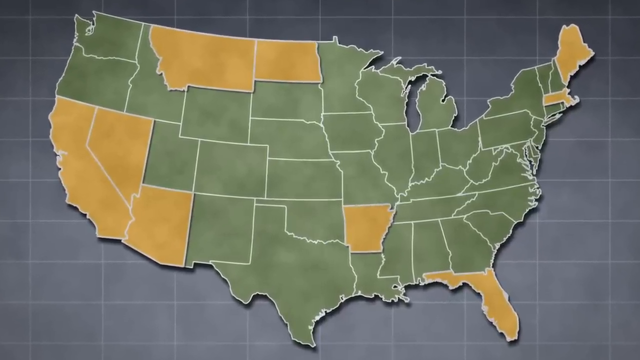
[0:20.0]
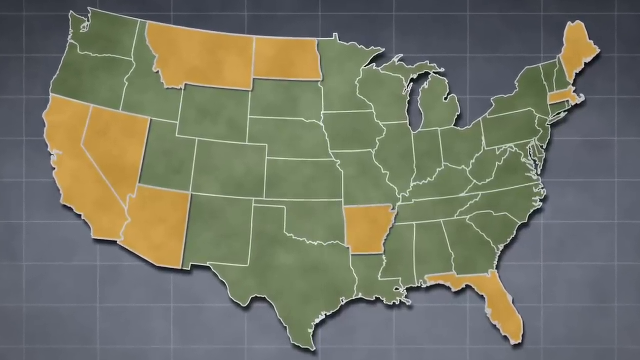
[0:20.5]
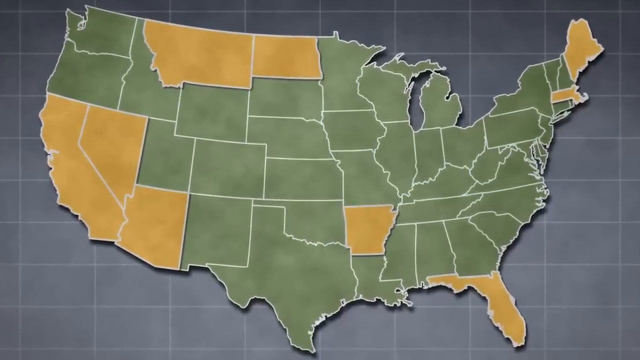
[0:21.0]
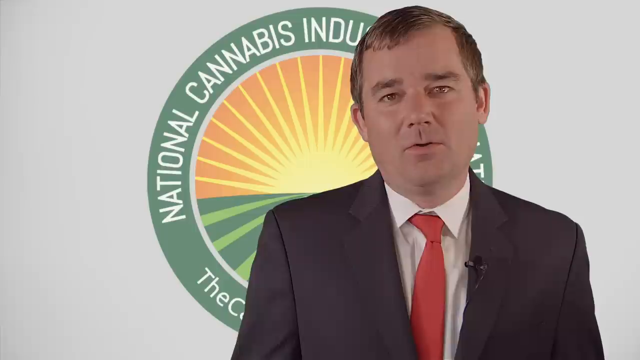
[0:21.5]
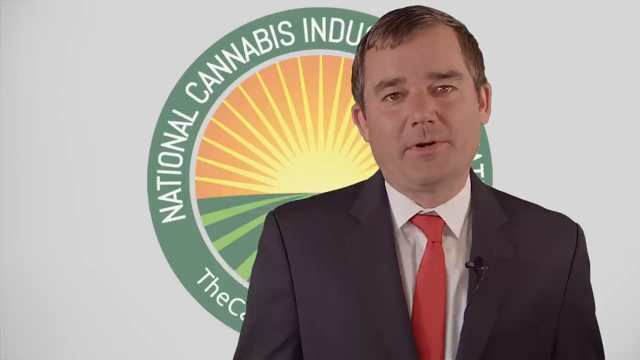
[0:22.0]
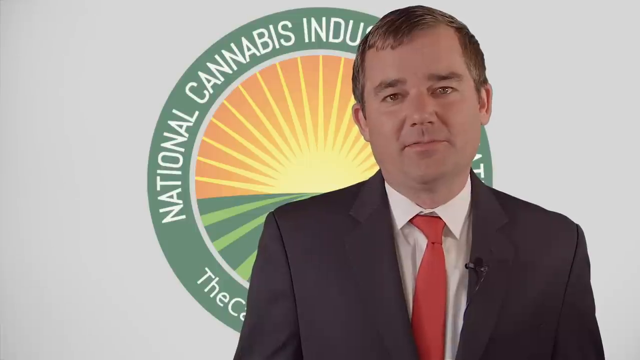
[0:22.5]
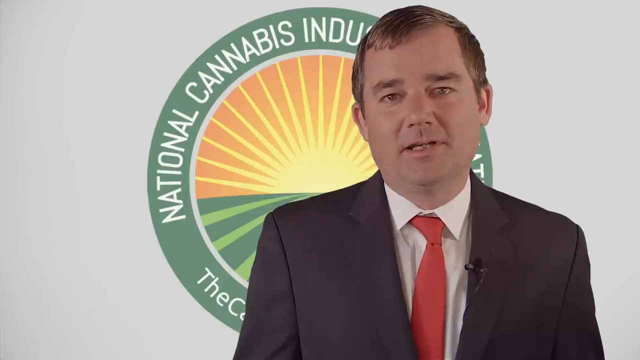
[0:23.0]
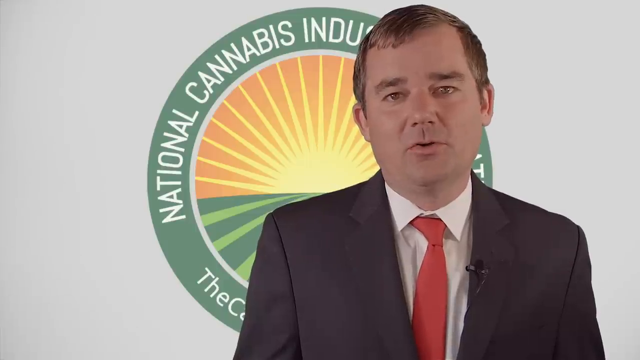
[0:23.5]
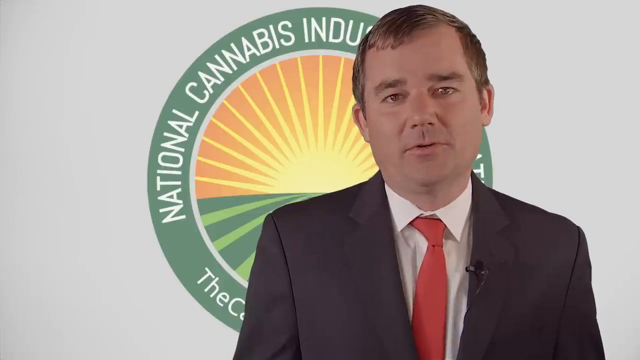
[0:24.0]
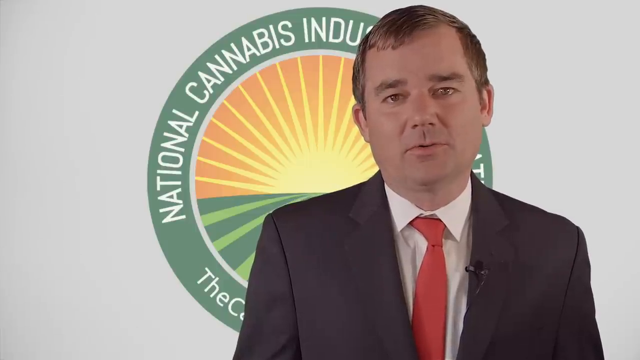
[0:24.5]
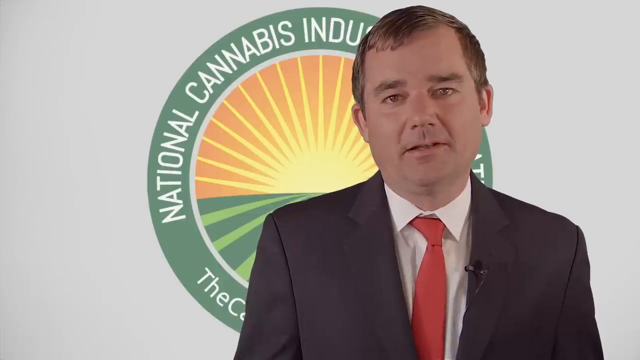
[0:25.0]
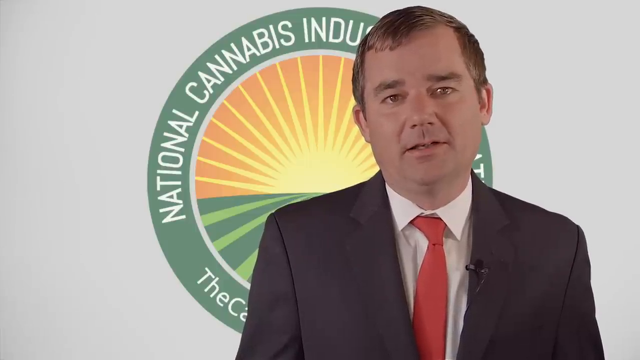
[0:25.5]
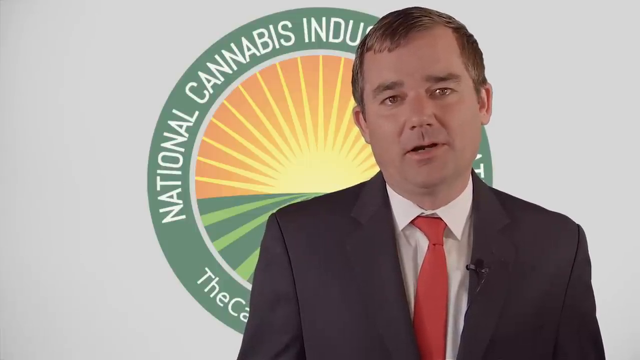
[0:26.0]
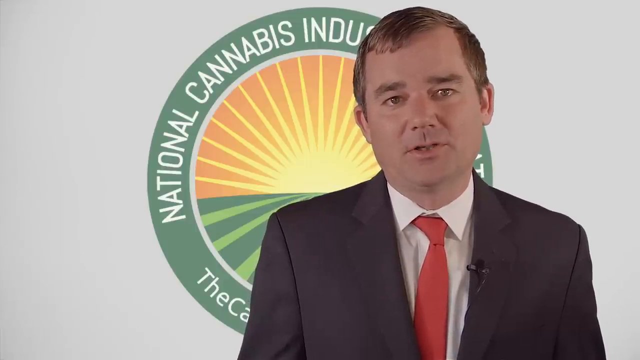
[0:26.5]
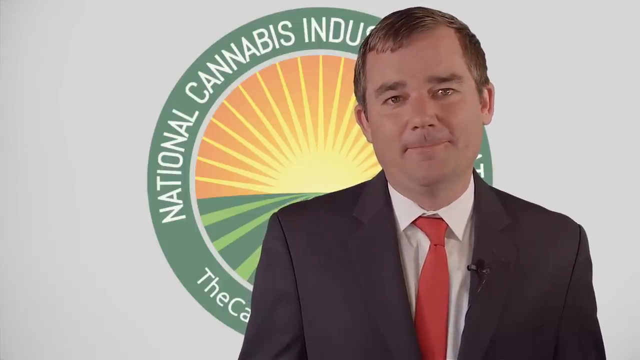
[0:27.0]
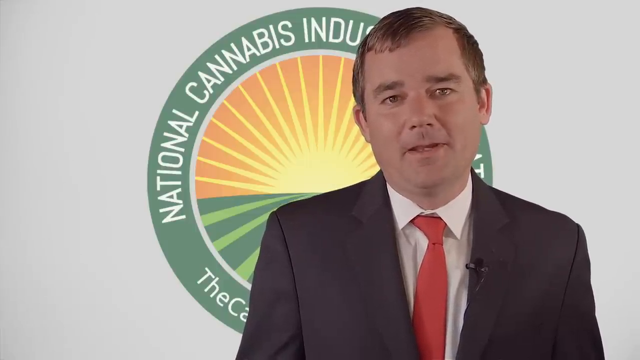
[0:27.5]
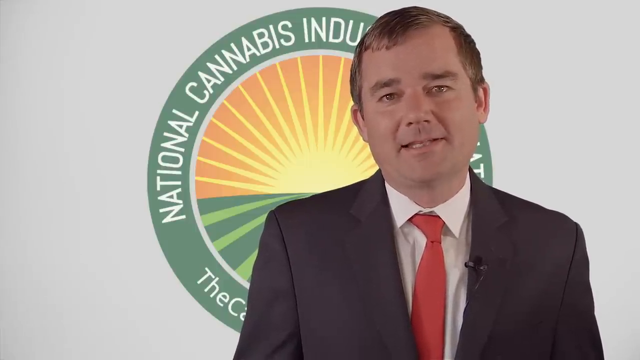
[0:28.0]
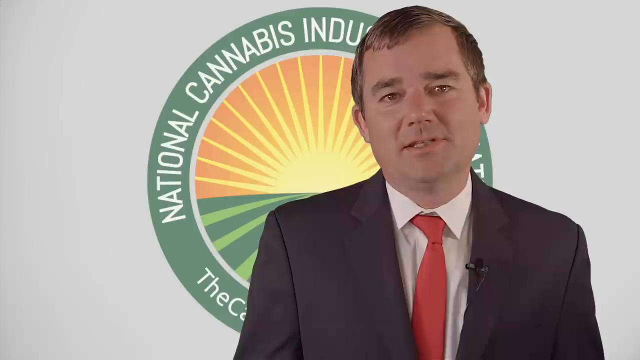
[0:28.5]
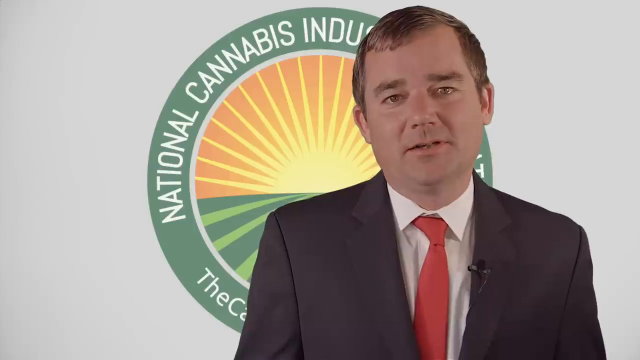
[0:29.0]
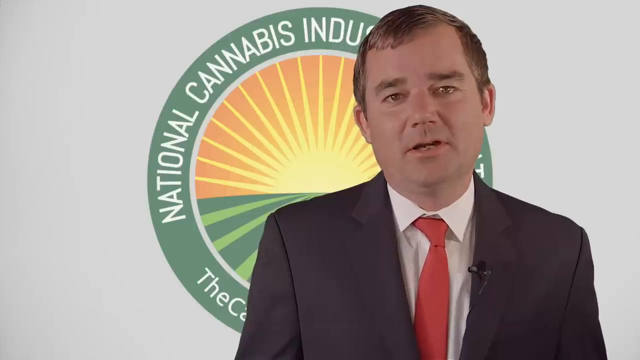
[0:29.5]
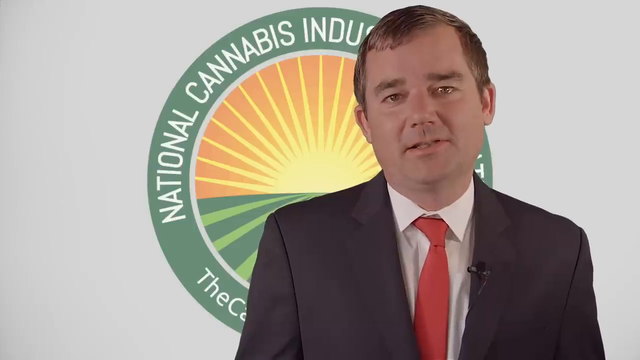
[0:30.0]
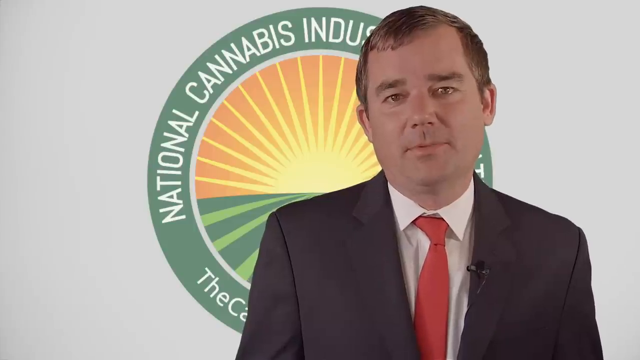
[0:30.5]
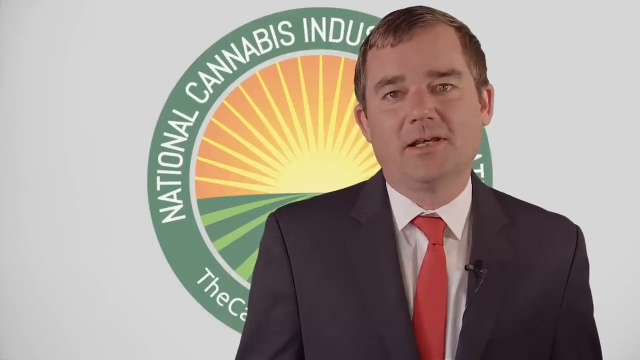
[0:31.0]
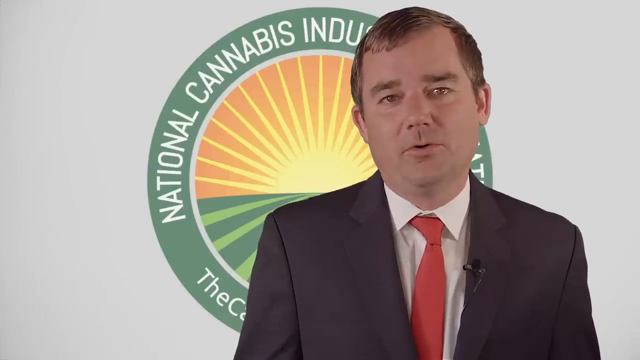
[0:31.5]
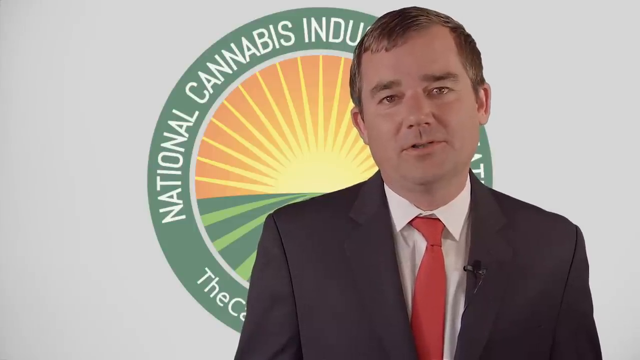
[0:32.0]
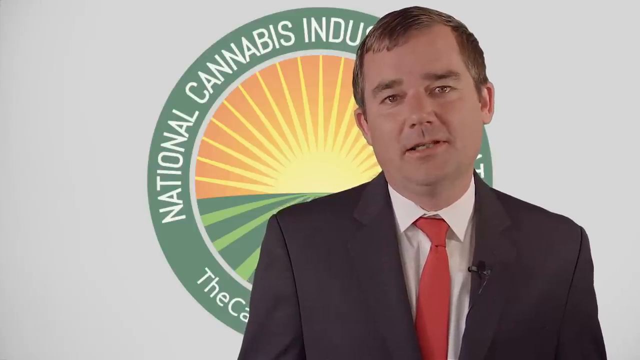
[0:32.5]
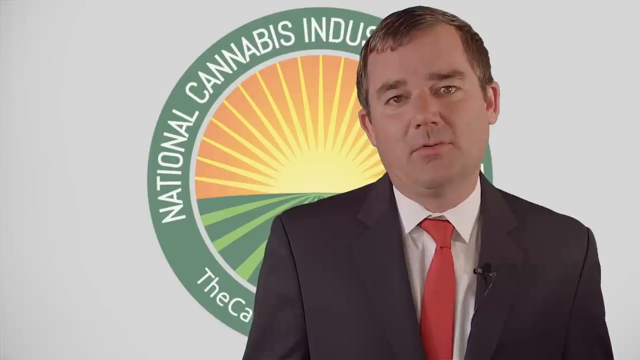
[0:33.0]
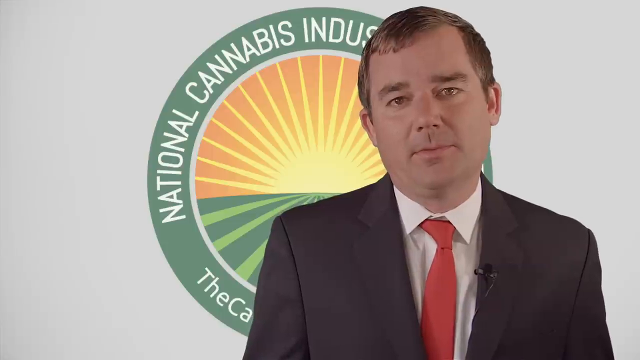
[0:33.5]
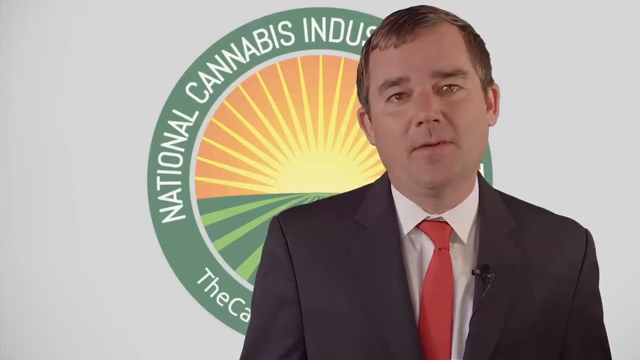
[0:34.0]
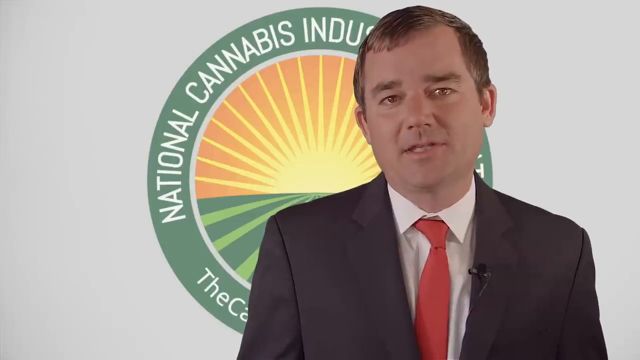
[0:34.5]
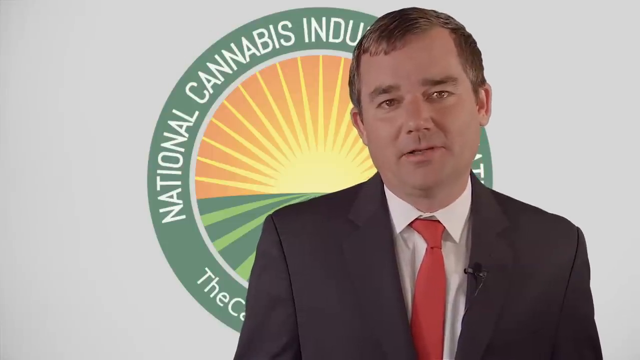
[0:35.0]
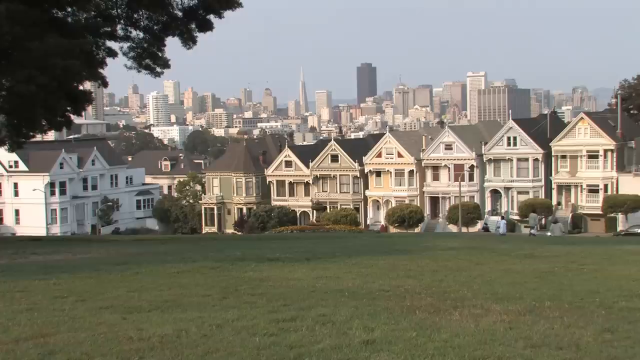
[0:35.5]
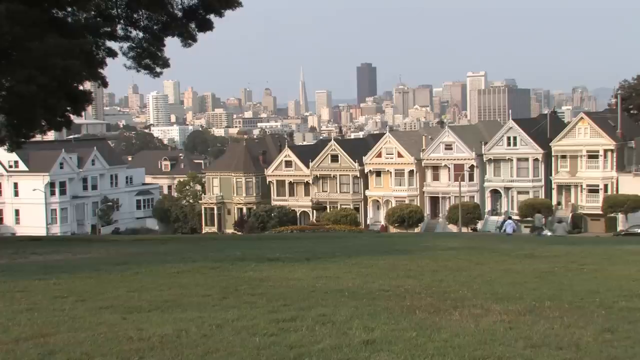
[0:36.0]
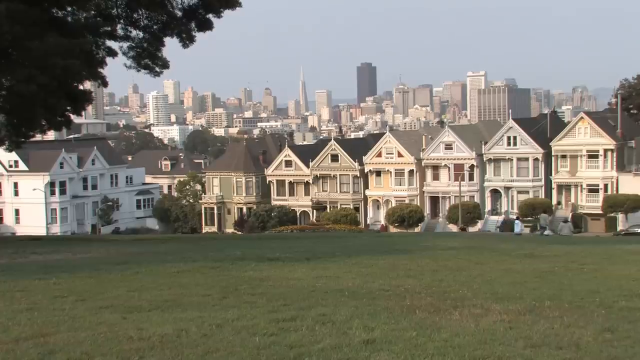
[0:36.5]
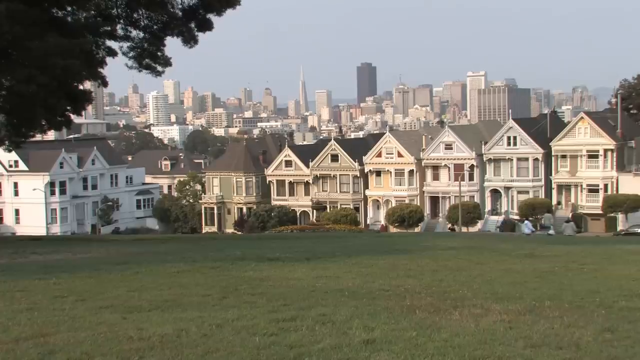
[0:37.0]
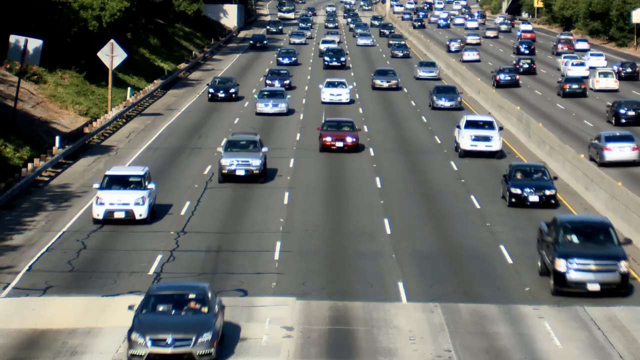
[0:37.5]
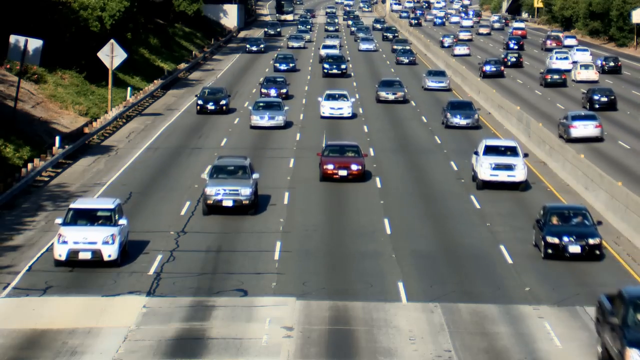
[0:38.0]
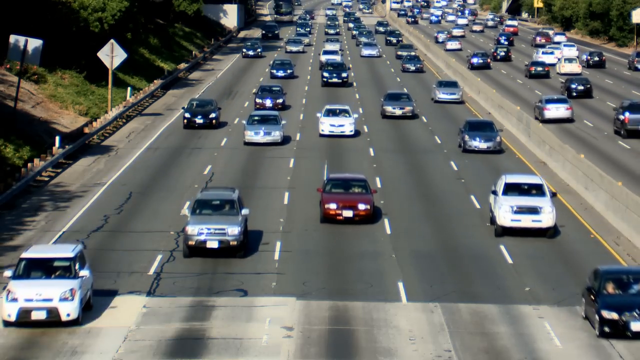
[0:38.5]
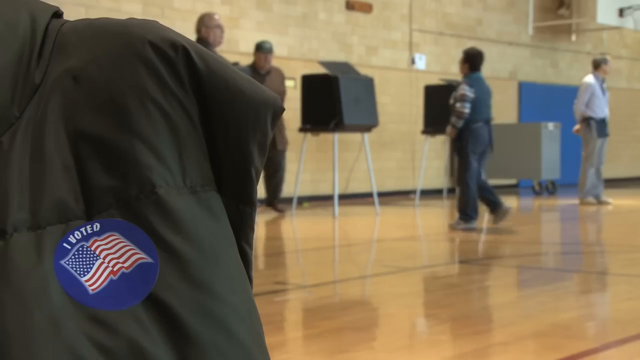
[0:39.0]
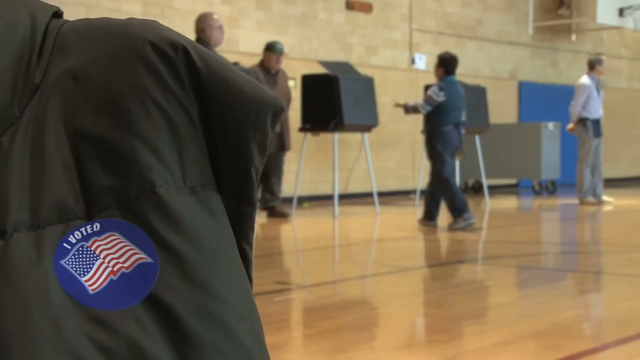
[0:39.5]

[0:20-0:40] The map zooms out slowly, with a few states colored yellow and the rest colored green. The NCIA executive, a white man in a black suit, white shirt and red tie, continues talking. Behind him, the National Cannabis Industry Association logo is visible on a wall or something similar, and he is standing in front of it as he talks toward the camera, apparently addressing something to do with cannabis. Next comes a town or city that looks like either New York or New Jersey, where a few houses are arranged neatly in a straight line in ascending order from the smallest to the tallest. Some sort of field is in front of the houses, and the city is in the background behind them. Vehicles are then shown on a highway, with traffic moving.